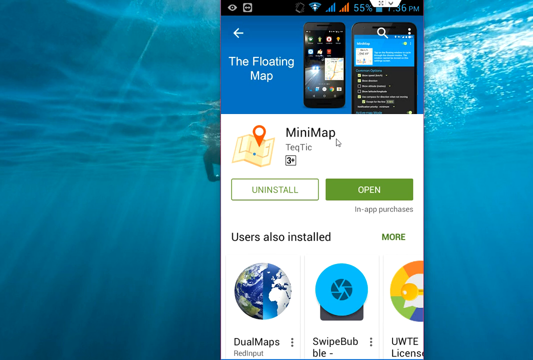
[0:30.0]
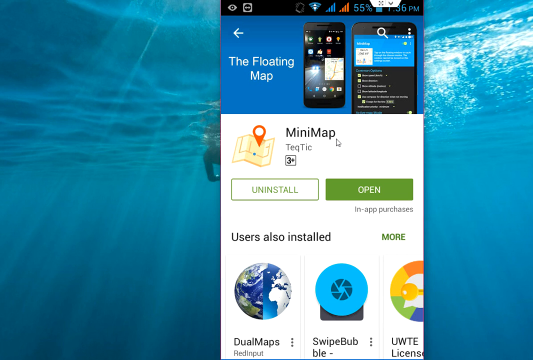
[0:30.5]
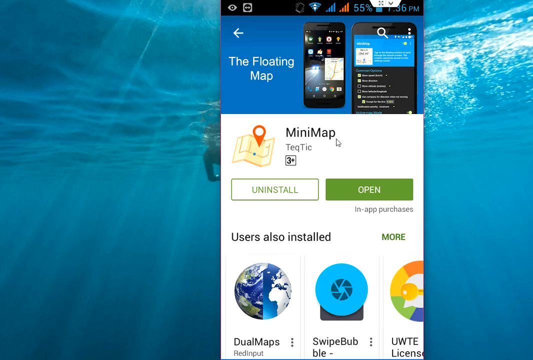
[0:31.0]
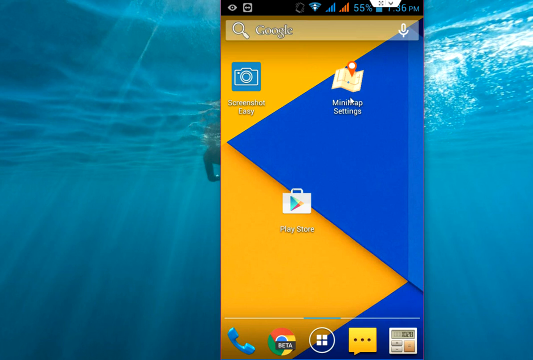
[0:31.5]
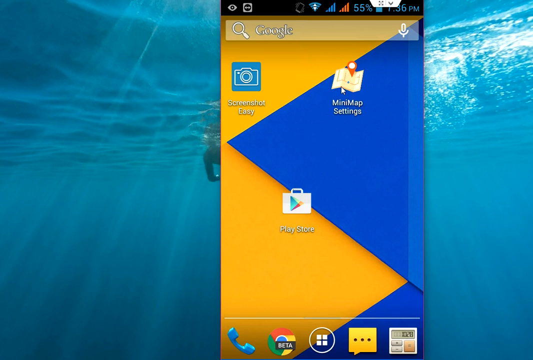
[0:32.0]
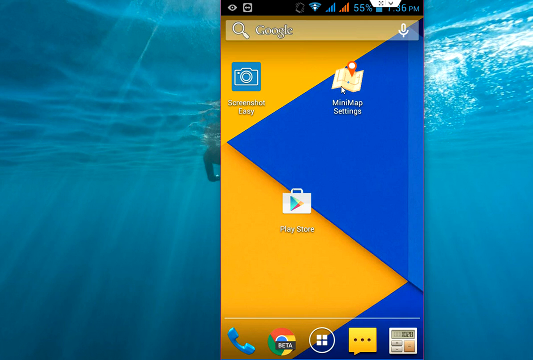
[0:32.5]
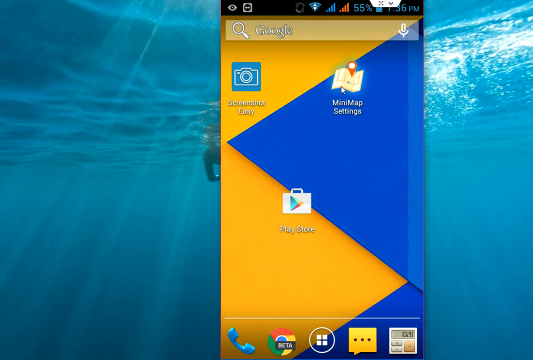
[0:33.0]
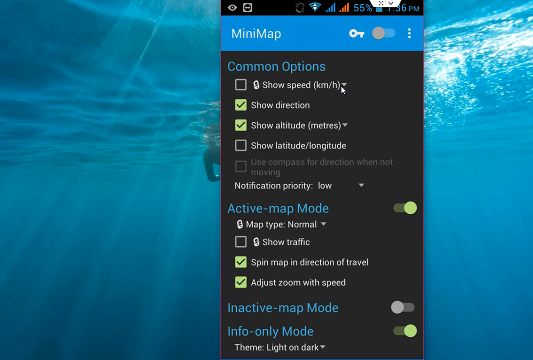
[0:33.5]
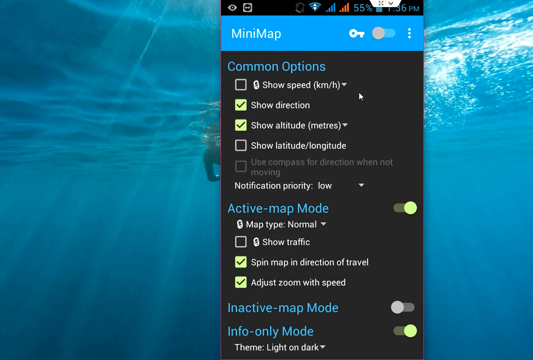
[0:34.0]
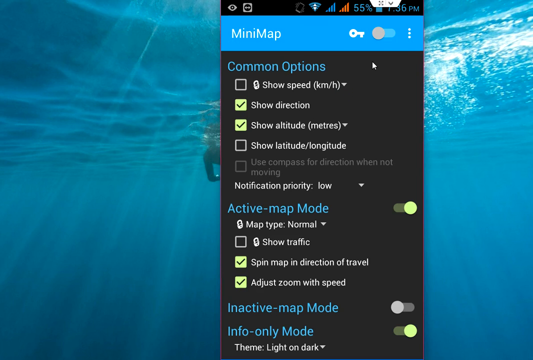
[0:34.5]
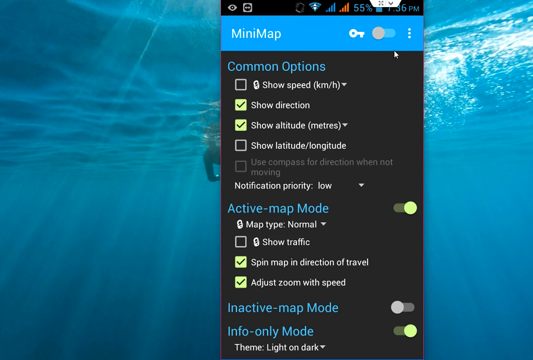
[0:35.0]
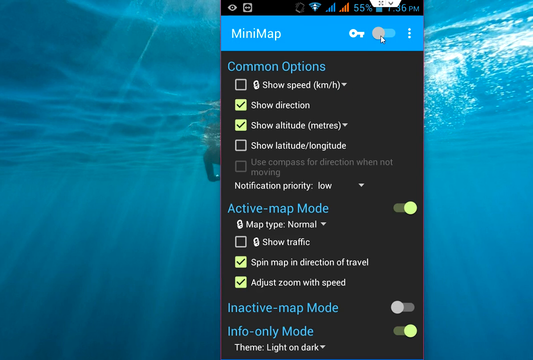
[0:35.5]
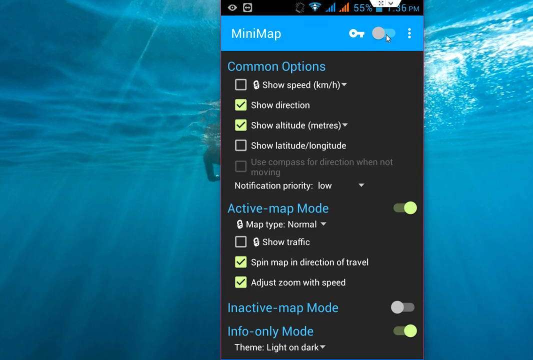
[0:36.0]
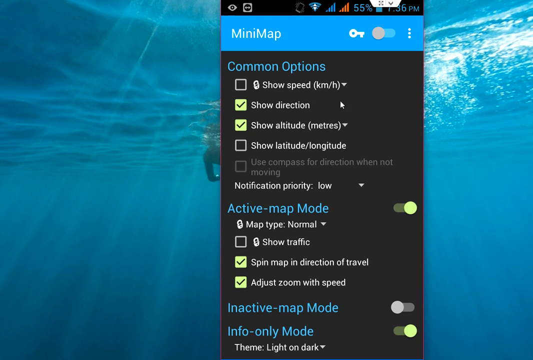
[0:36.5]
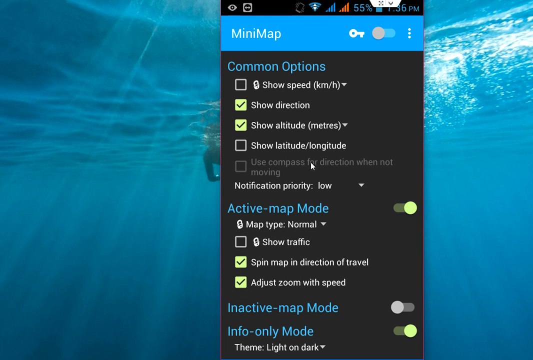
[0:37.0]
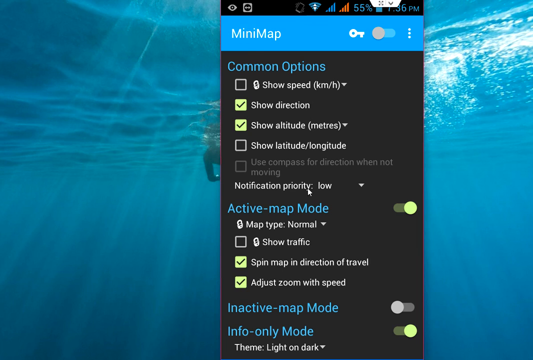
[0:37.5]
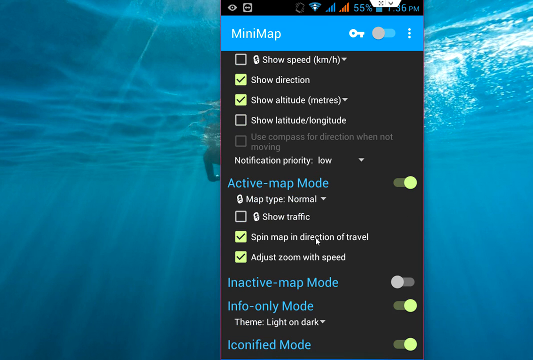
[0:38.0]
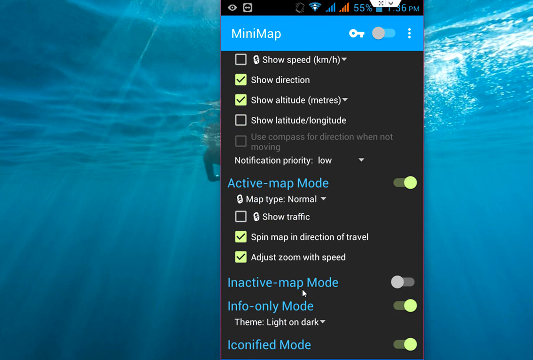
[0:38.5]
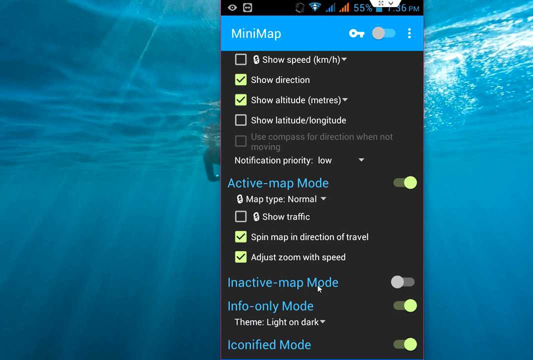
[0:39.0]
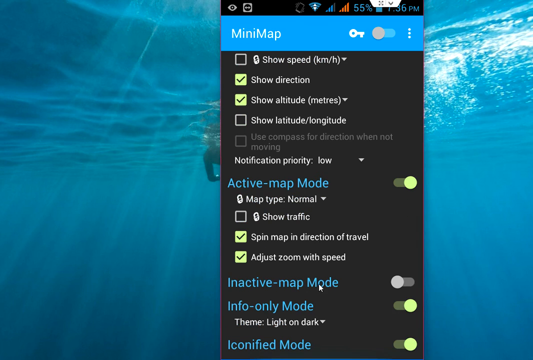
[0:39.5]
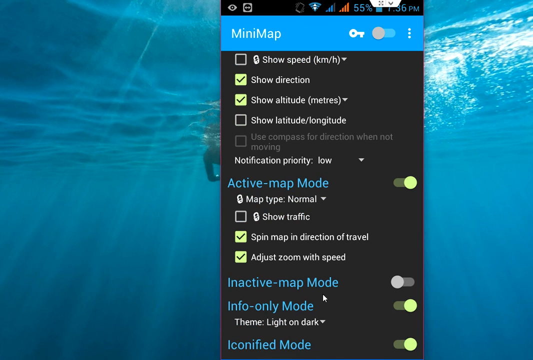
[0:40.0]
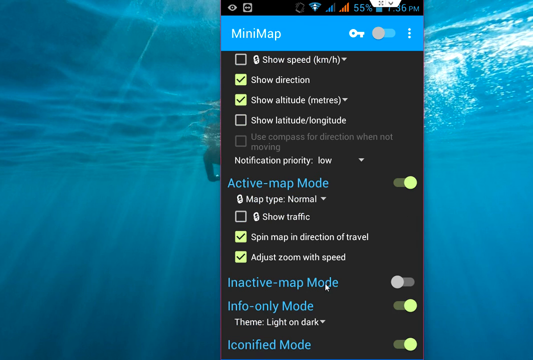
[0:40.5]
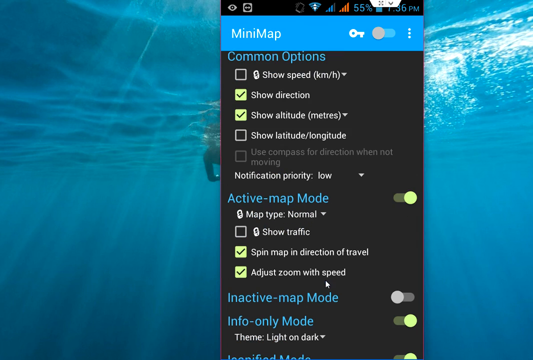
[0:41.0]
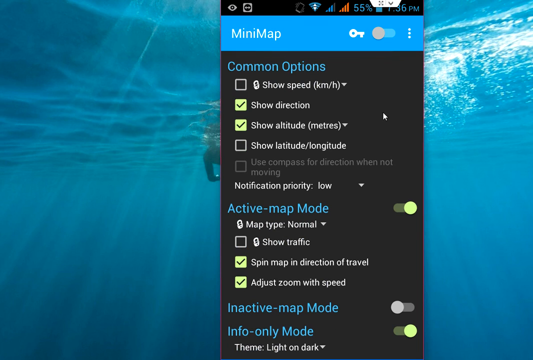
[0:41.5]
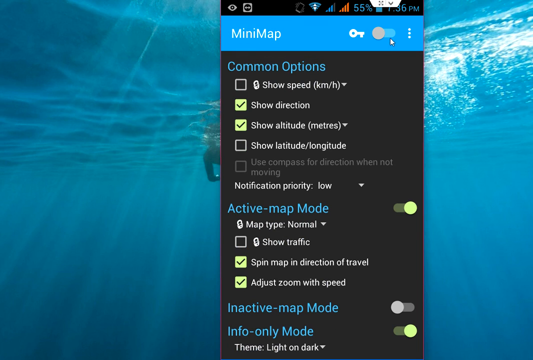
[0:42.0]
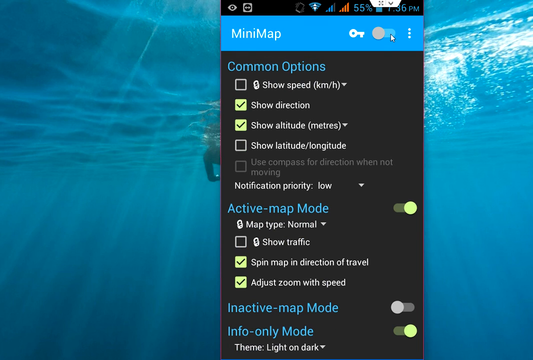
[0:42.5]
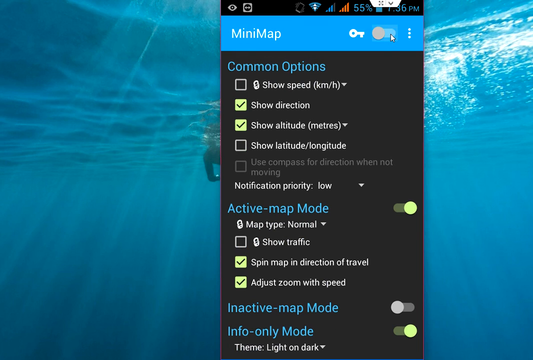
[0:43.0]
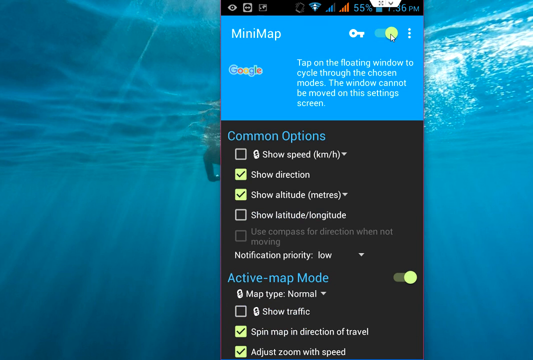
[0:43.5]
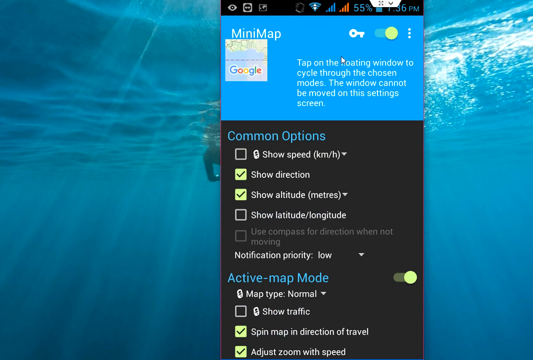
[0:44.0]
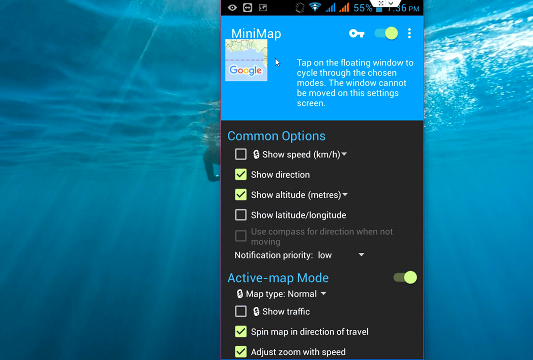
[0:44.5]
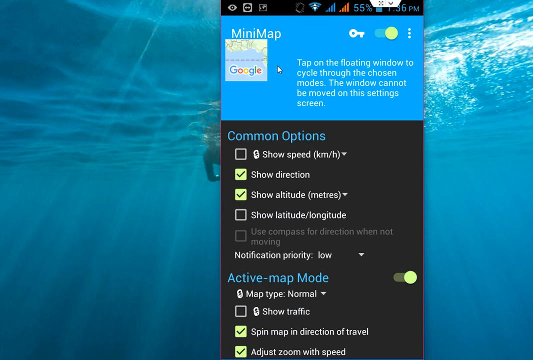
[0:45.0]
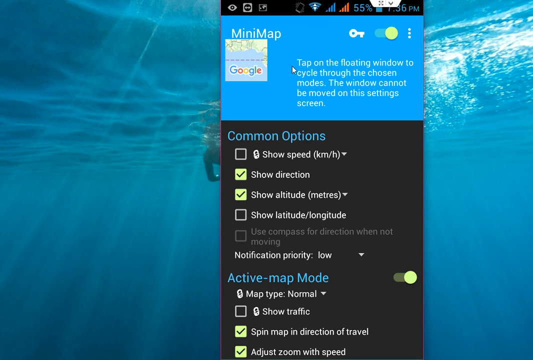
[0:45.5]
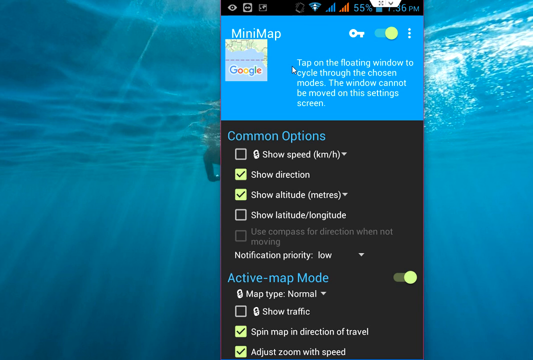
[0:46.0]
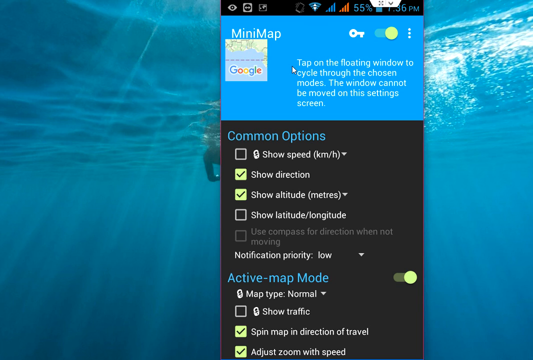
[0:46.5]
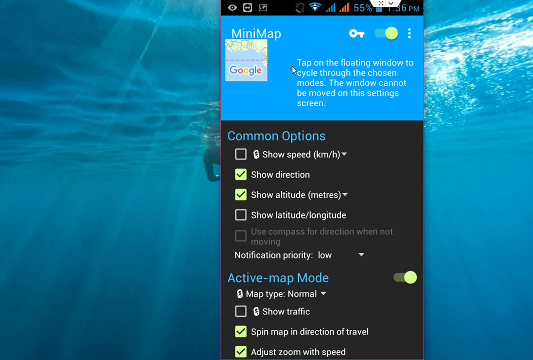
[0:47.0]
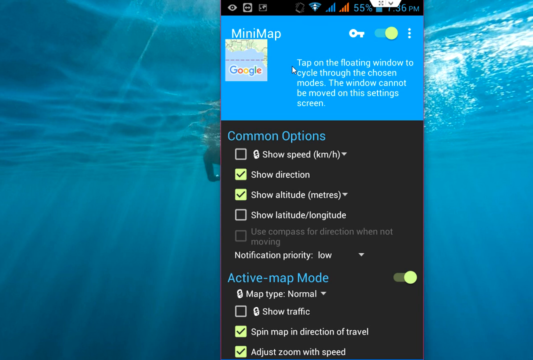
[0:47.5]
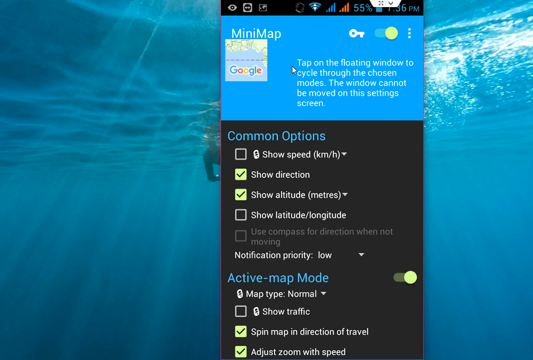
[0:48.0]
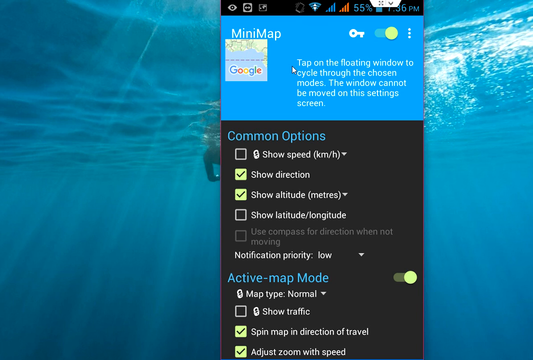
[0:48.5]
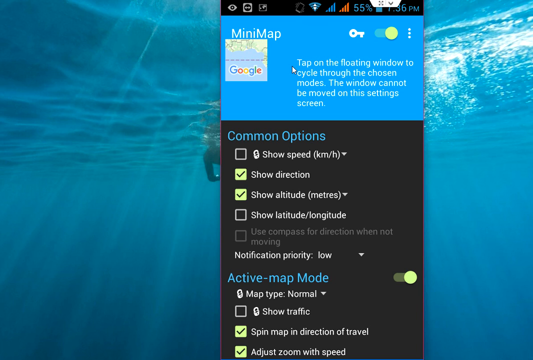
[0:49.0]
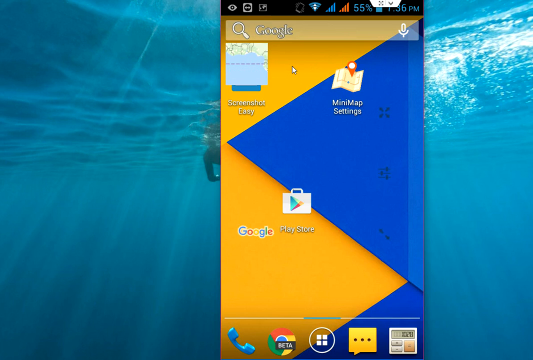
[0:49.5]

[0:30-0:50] Under the water, the sun rays shine through, and the swimmer remains in the background in neoprene and a scuba mask. The phone is almost centered, but more to the right. At the top of the phone screen, one third of the screen is blue with "floating map" in white font, and there are two photos of cell phones next to that. Below it is a white background with a mini map logo and the words "mini map" in black font. Below "mini map" is text spelled T-E-Q, T-I-C, and in a box below that it says "three plus". There is an uninstall button that is white with a green frame, and next to it an open button that is green with white font. The screen shifts abruptly back to the graphic of mini-map settings, Play Store and Screenshot Easy, with the gold triangles on the left and the blue triangle on the right. An arrow tracks, demonstrating opening mini-map, and the mini-map opens. At the top of the screen is a blue band with white font that says "mini-map" and a white key, along with an on-off slide feature. Below, the background is black. Blue font reads "Common Options". Below that, in white font, are "show speed", "show direction", "show altitude", "show latitude", "use compass for direction when not moving" and "notification priority". Each selection has a box next to it; show direction and show altitude have green checkmarks. Below this section is another section reading "active map mode" in blue, indicated as slid on with a green indicator button. Below that are "map type normal", "show traffic", "spin map in direction of travel" and "adjust zoom with speed"; spin map in direction of travel and adjust zoom with speed both have green checkmarks. Below that is inactive map mode, which is not turned on. The arrow scrolls to point at these various selection options. Below inactive map mode is "info only mode", also in blue font, and below that white font says "Theme light on dark". The arrow scrolls to the top, shifts mini-map to on, and the screen shifts to a map.